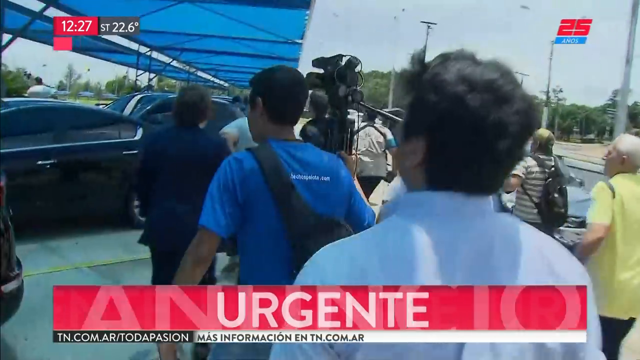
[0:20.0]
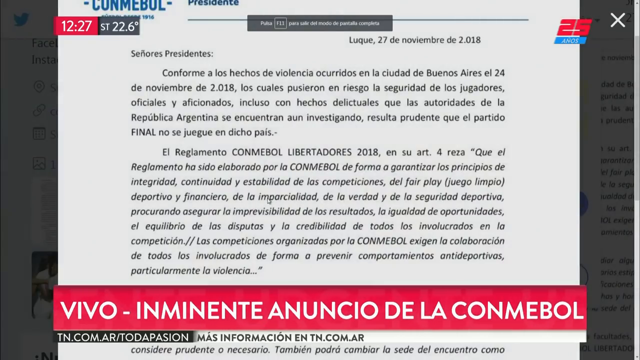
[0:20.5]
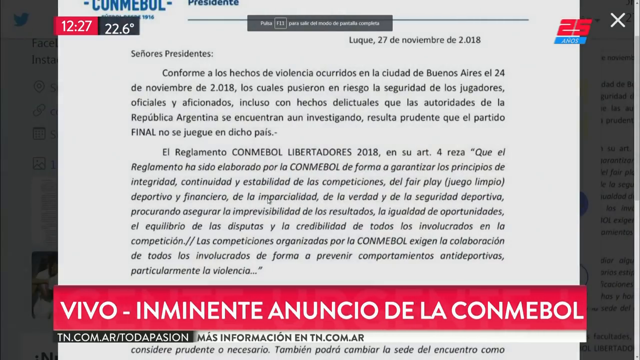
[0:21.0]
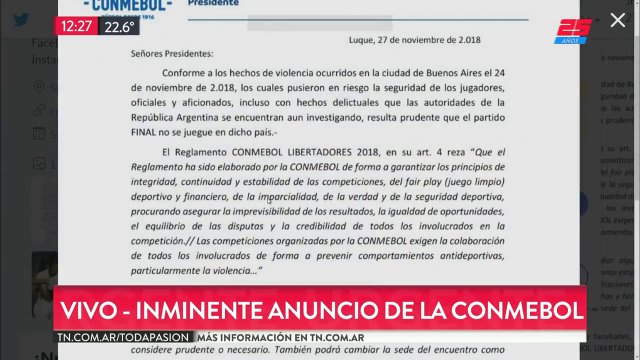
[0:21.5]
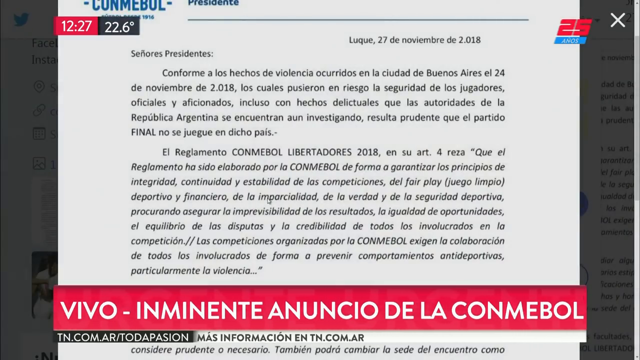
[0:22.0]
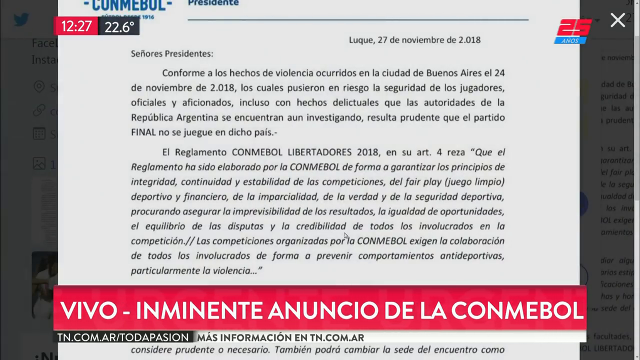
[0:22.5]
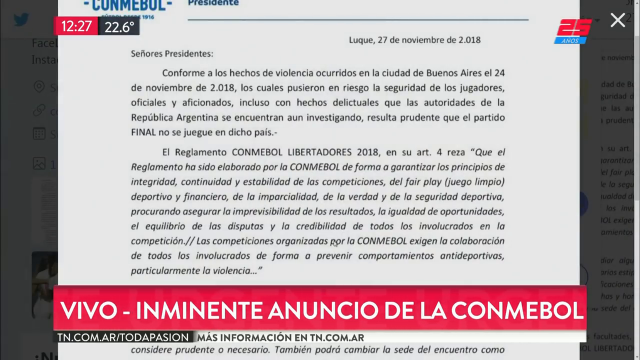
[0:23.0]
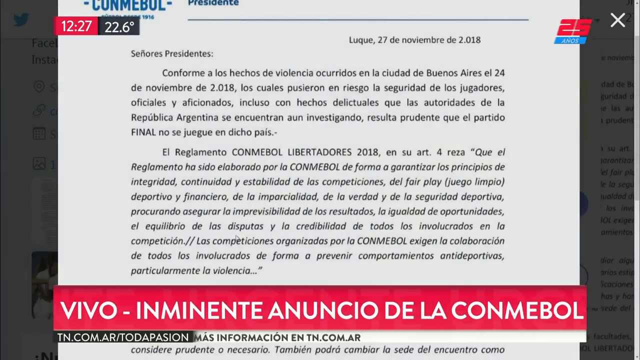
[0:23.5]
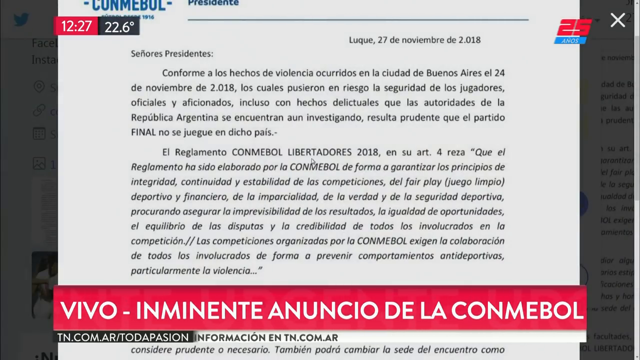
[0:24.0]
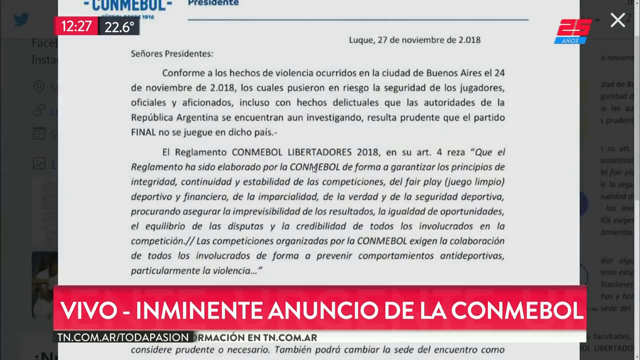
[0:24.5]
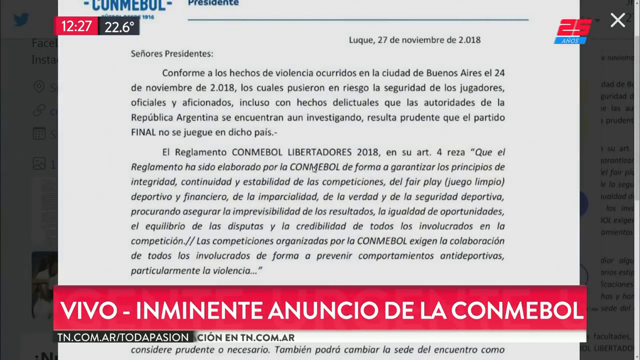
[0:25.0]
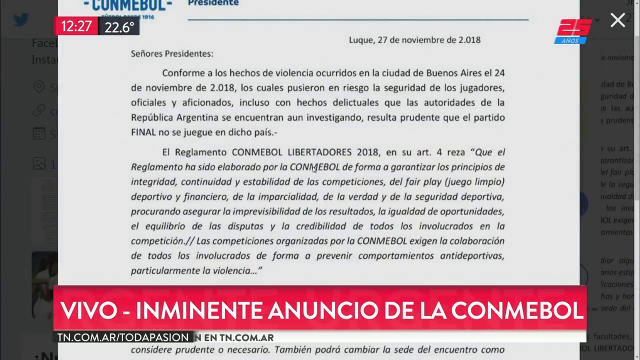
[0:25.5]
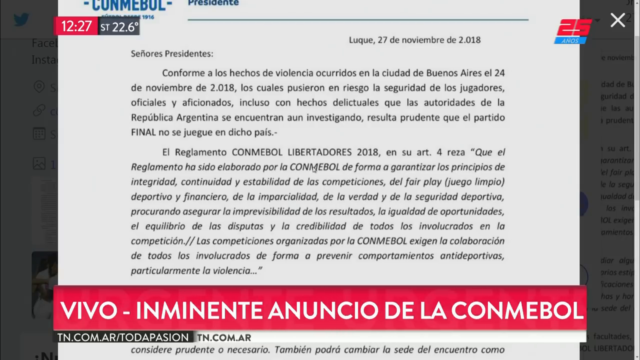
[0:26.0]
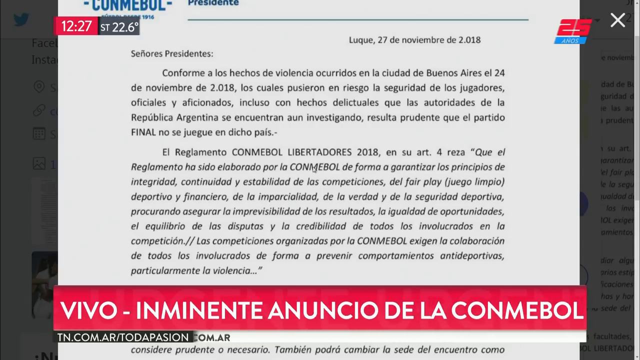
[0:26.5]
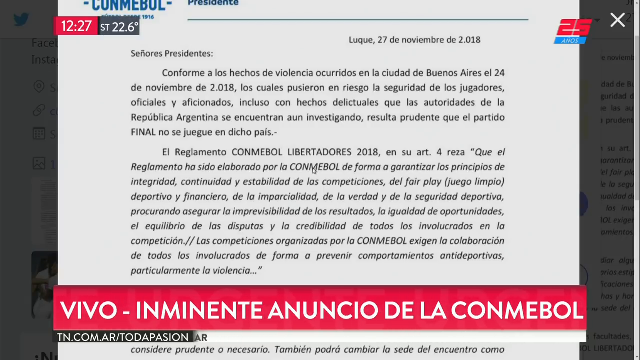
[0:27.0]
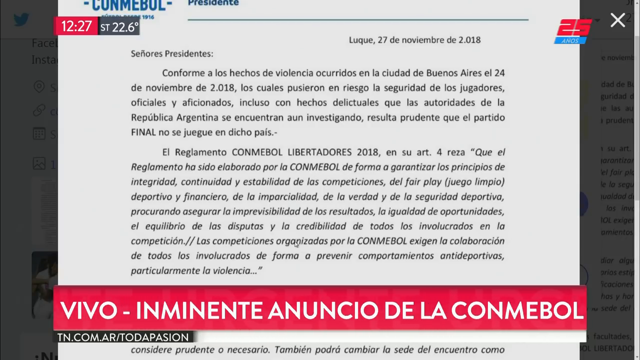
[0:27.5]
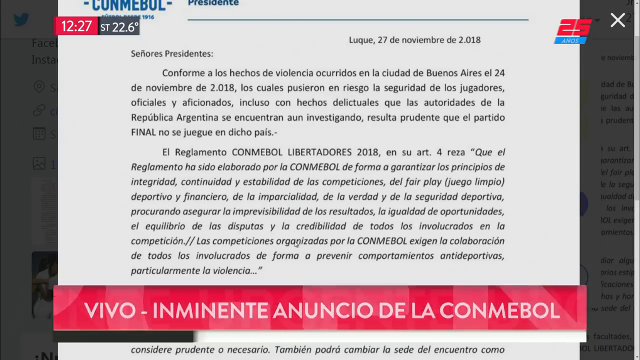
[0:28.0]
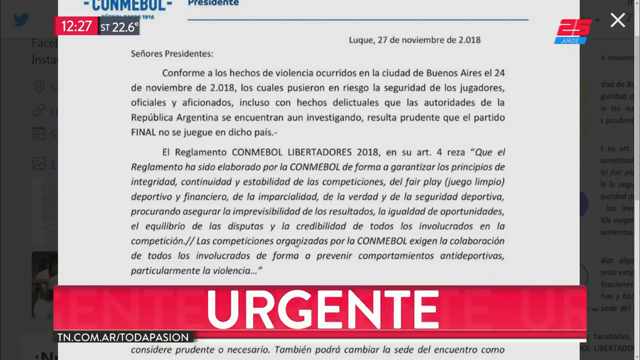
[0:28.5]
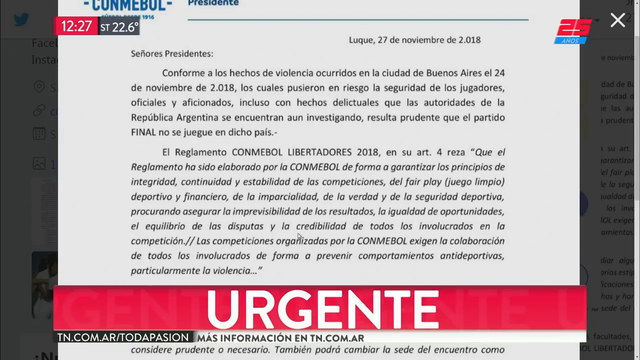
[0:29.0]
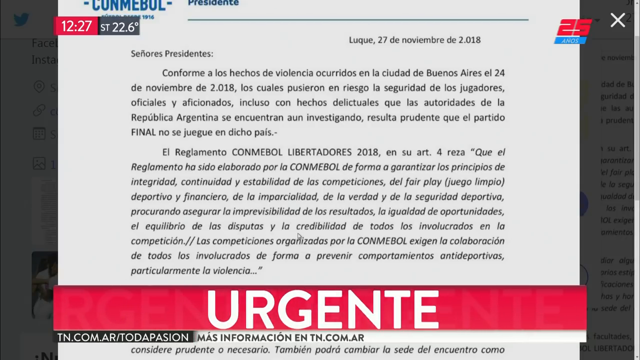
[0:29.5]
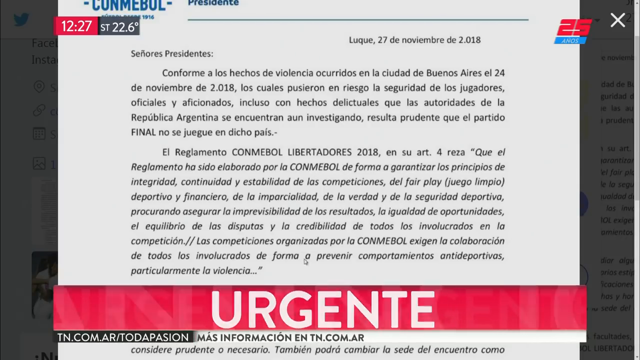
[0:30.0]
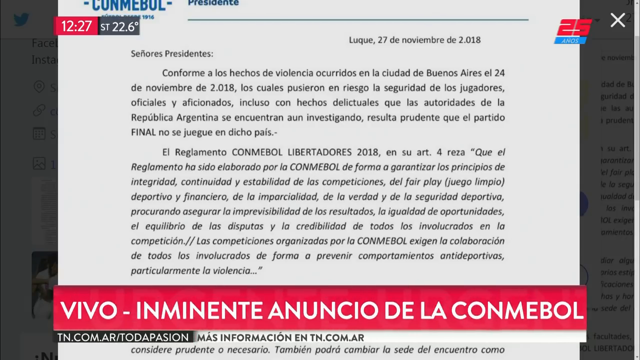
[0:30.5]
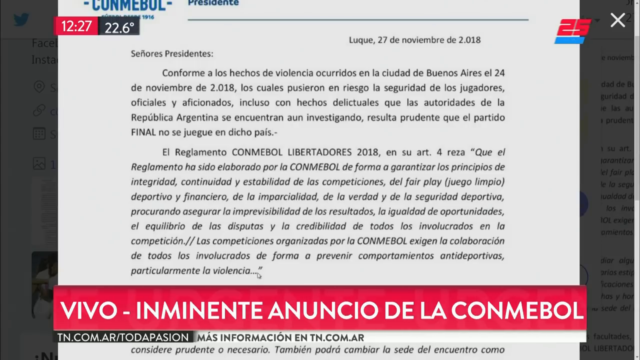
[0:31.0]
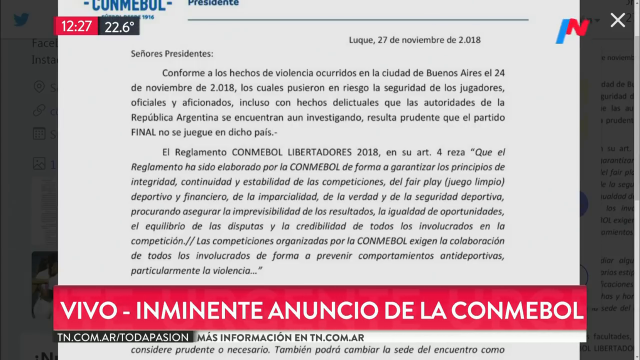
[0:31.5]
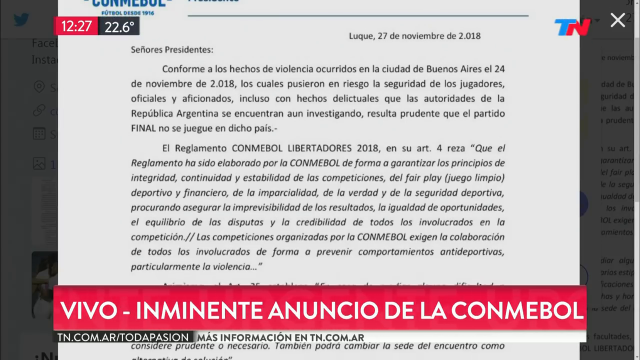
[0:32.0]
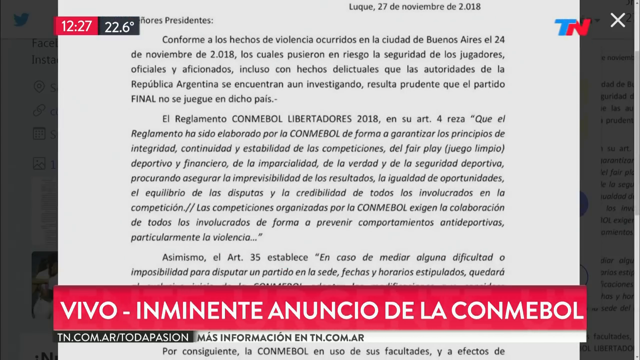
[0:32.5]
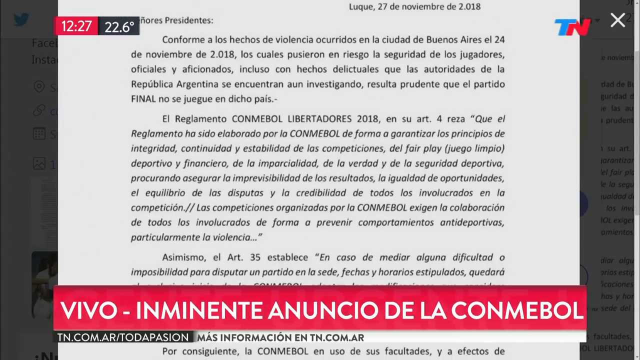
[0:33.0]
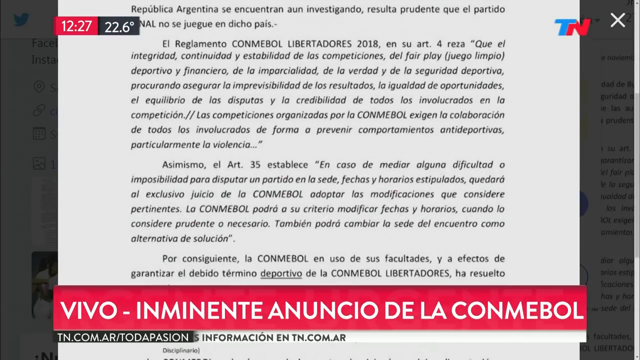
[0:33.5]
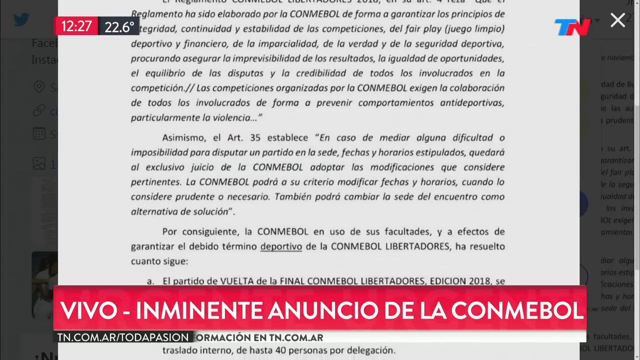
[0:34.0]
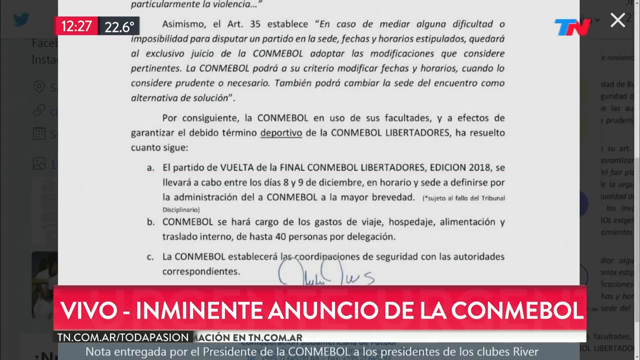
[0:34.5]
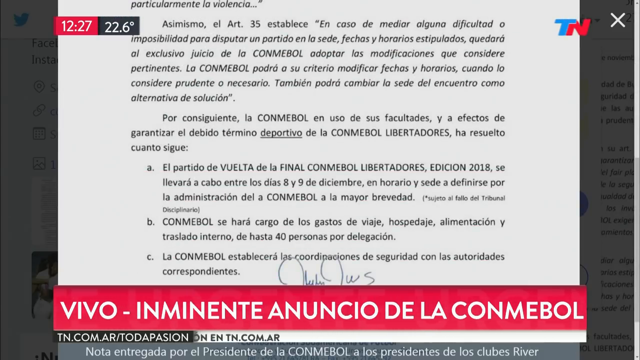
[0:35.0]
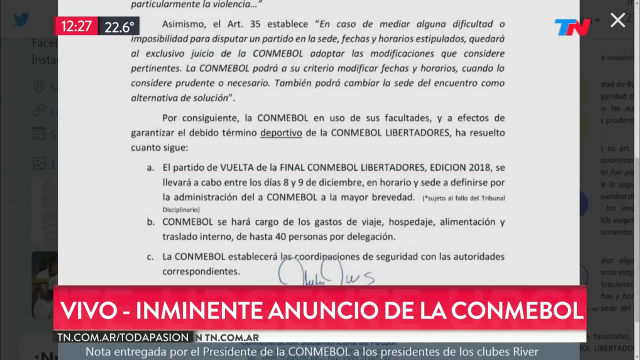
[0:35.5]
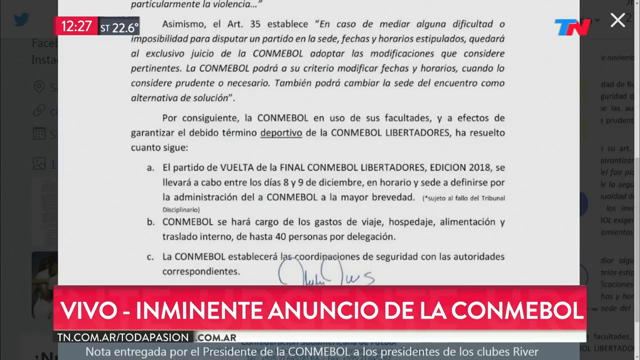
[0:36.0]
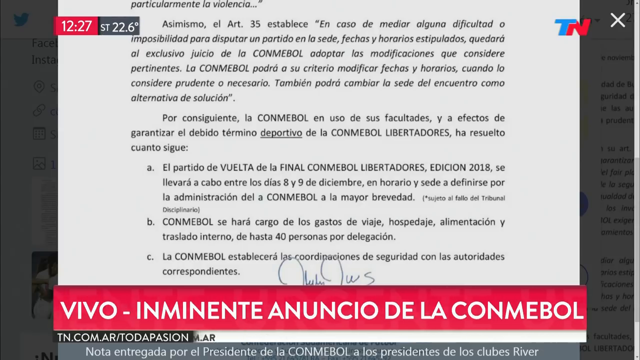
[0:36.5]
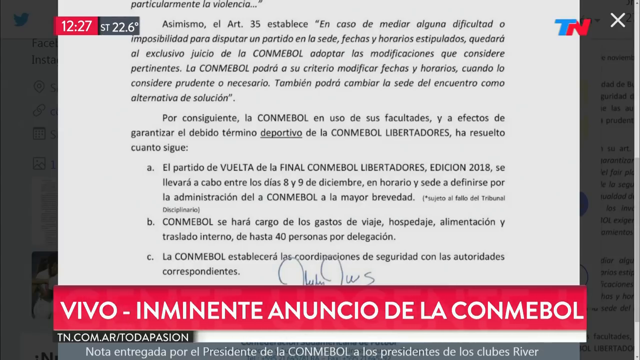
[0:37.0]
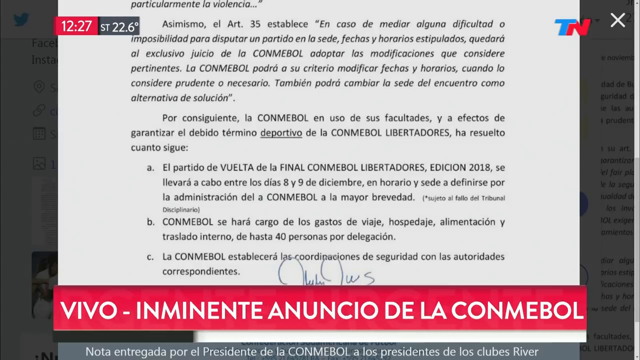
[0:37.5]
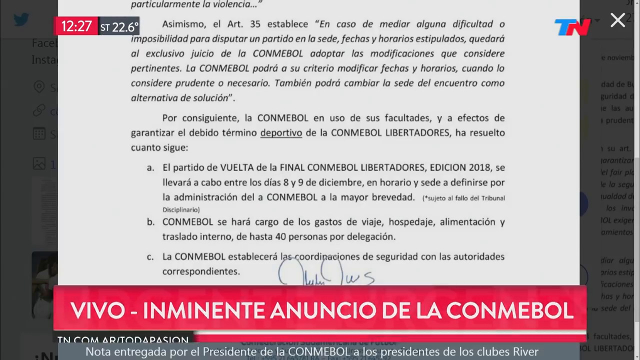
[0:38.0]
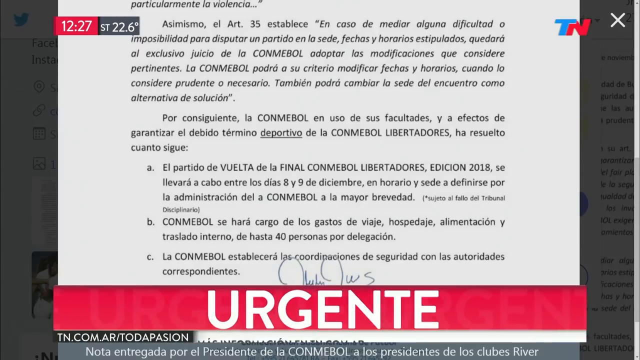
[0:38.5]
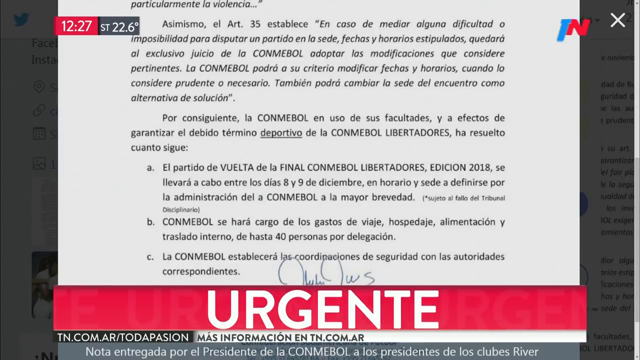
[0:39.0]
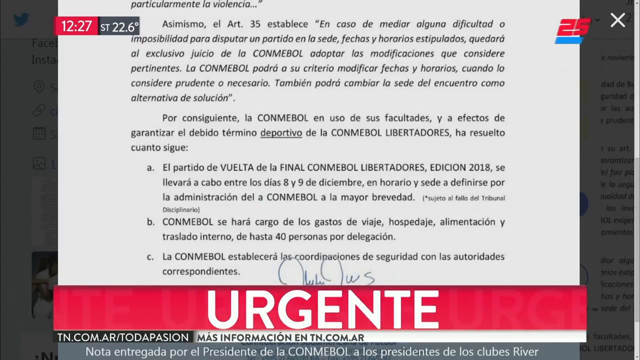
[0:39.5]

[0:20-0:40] A group of people approaches a car outside, which is on the left side of the group. The screen then changes to text in a foreign language with a red banner at the very bottom. Possibly a date appears at the top, and the red banner changes to read "URGENTE", while the top shows "1227 PM". What appears to be a webpage, possibly an article, is scrolled down until a signature becomes visible, suggesting it may be some kind of signed document. The view stays on that screen, and the red banner at the bottom reads "URGENTE" again.